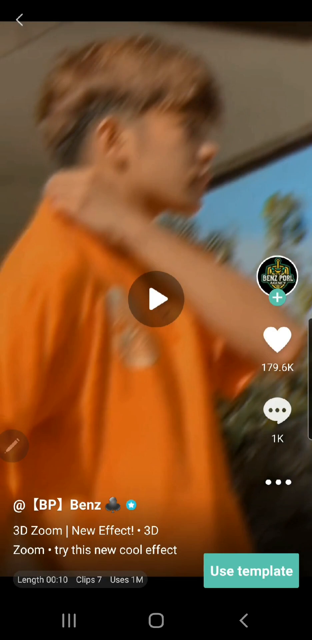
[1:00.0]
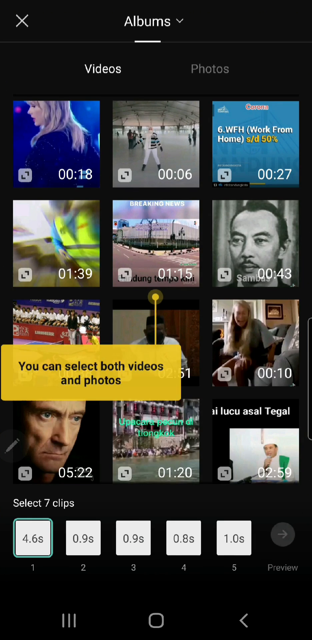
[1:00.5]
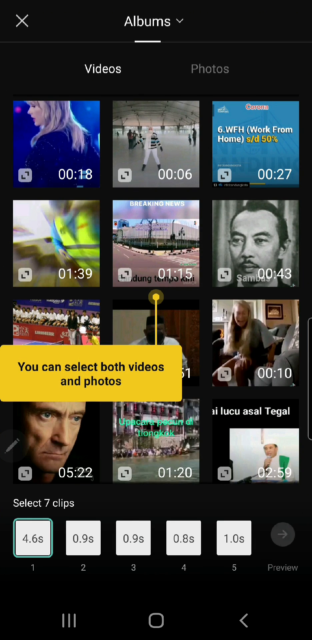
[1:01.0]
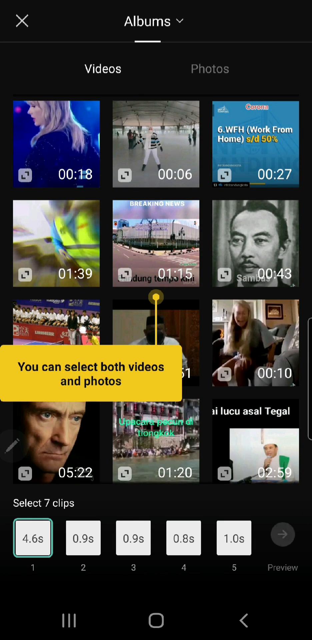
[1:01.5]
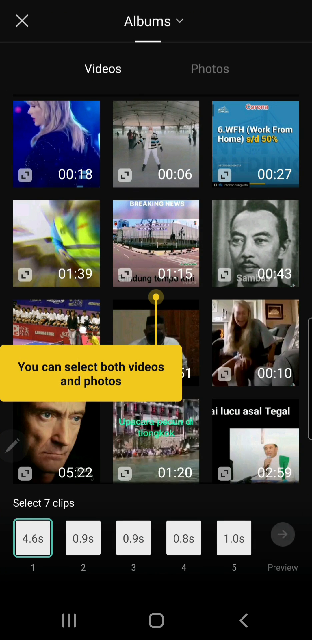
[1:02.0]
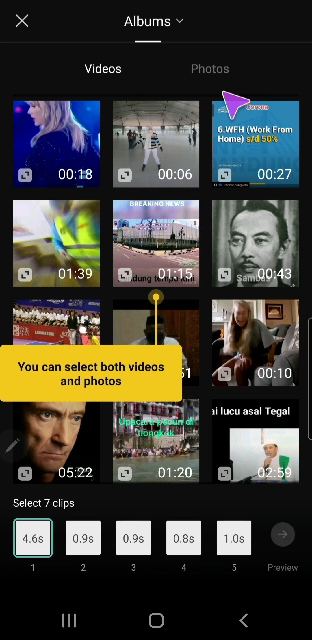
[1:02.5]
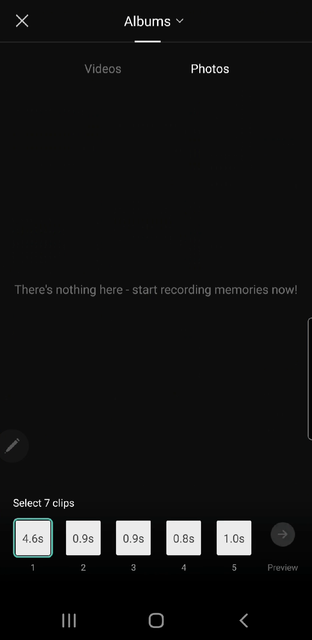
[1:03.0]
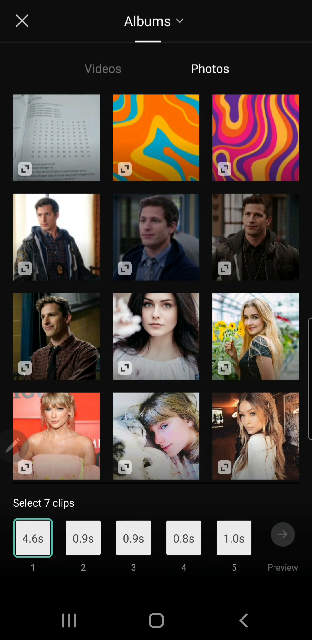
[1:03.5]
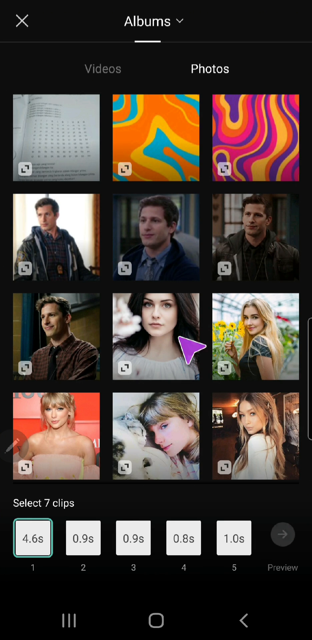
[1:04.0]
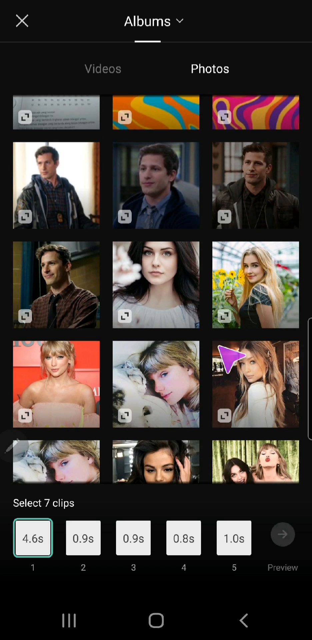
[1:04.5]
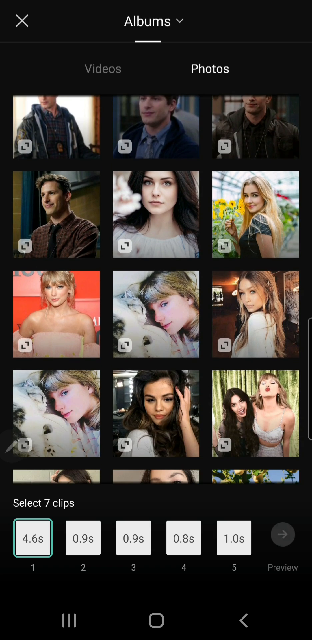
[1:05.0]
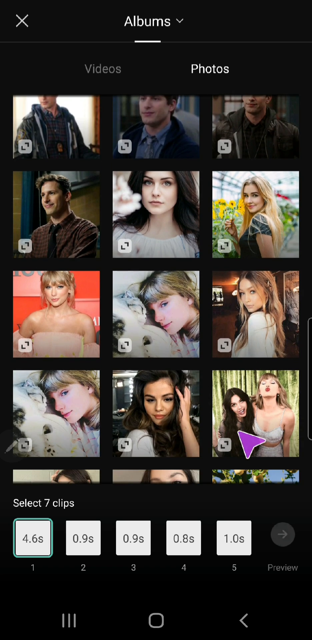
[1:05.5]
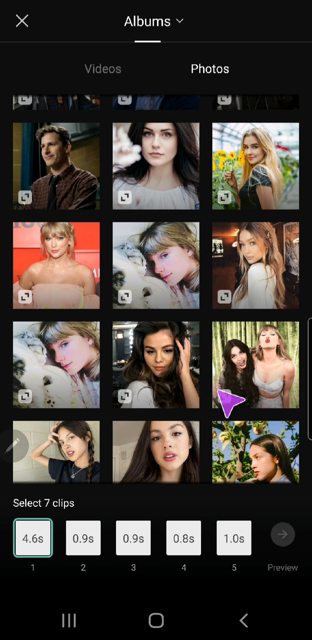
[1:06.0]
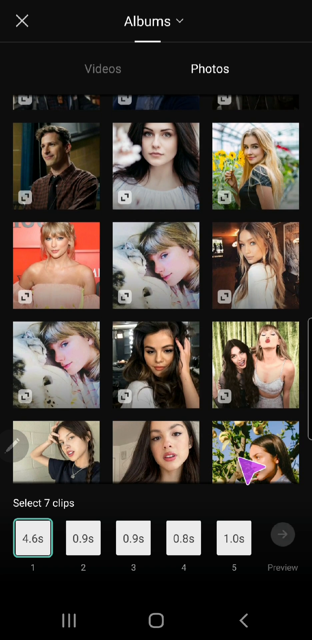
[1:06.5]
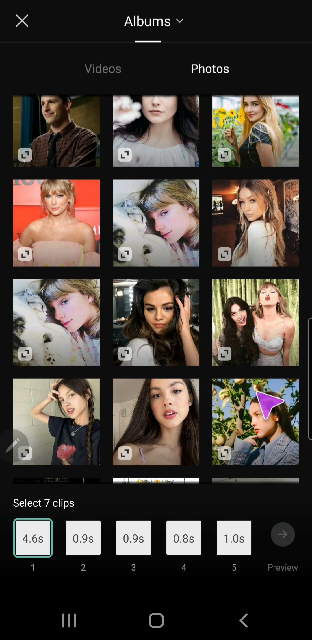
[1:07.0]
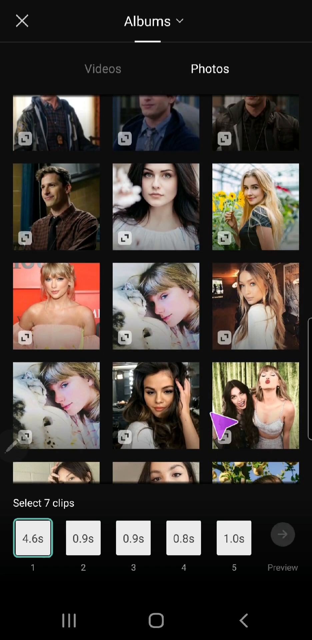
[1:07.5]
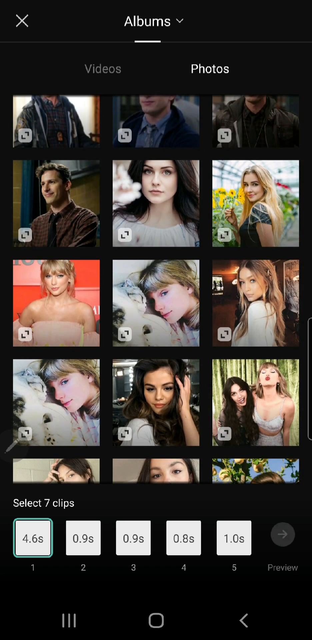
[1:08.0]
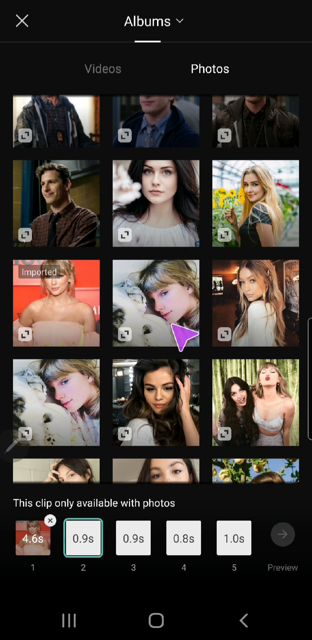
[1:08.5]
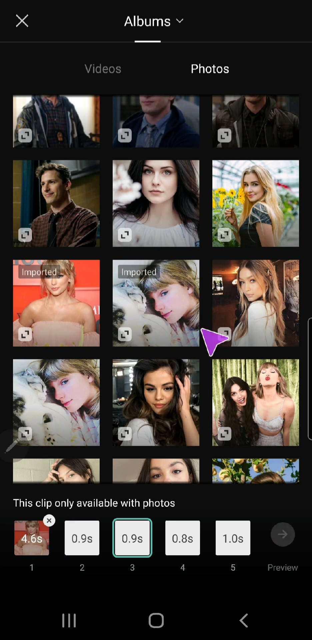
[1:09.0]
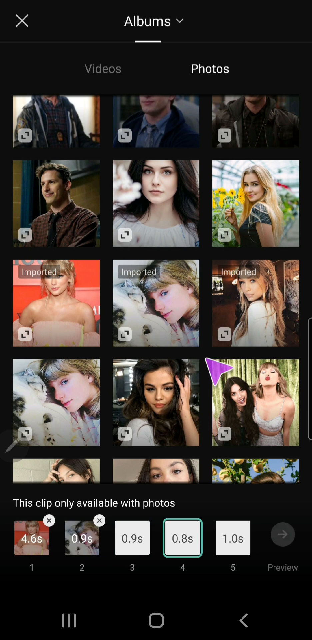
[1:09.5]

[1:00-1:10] An album opens with a grid of thumbnails of 12 different videos. The mouse pointer goes up and clicks the photos option, showing a grid of photos, mostly of women, including one of Taylor Swift and some men at the top. The user seems to browse through the photos, then selects three, which are added at the bottom.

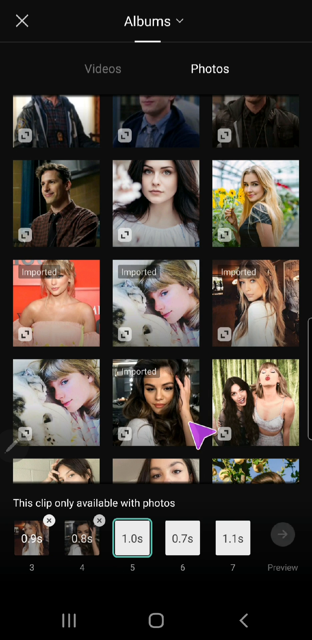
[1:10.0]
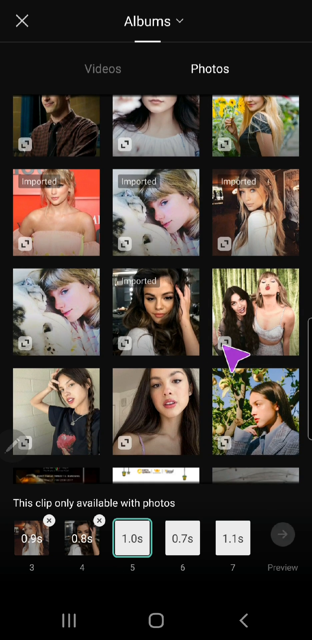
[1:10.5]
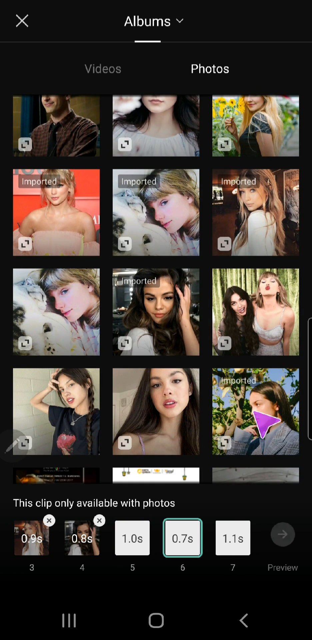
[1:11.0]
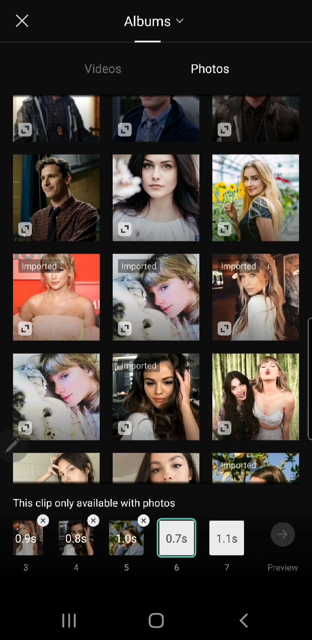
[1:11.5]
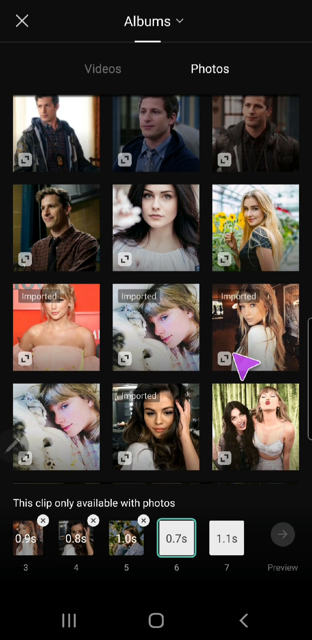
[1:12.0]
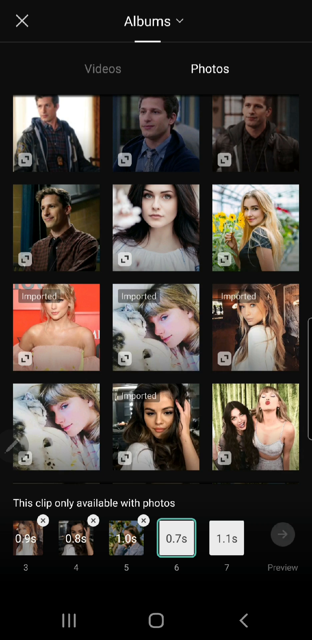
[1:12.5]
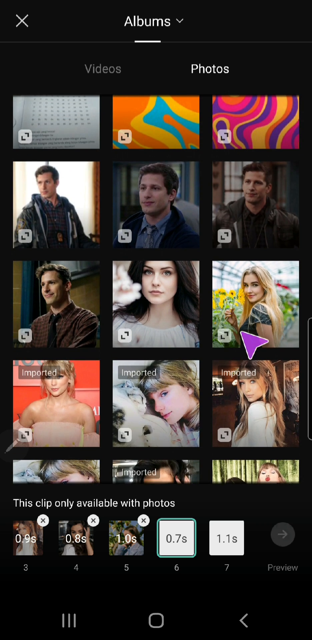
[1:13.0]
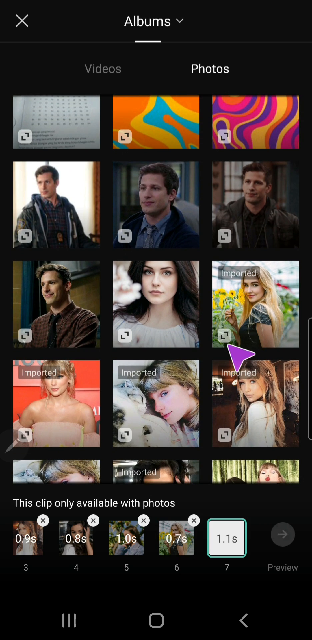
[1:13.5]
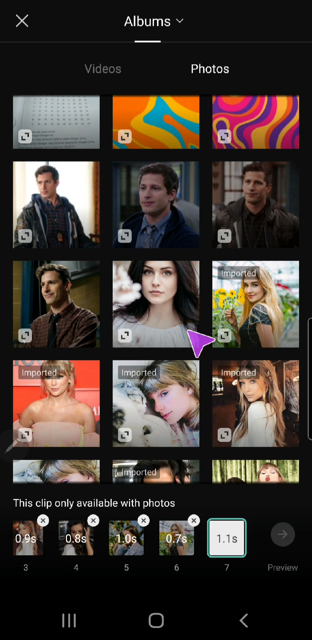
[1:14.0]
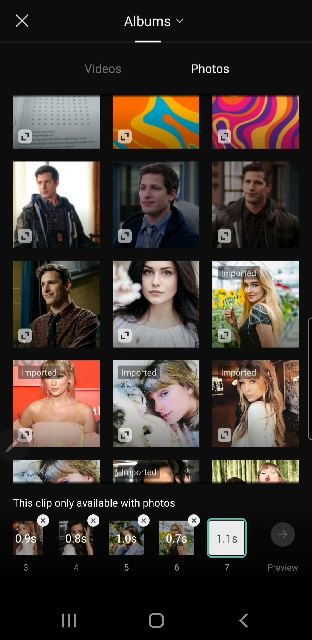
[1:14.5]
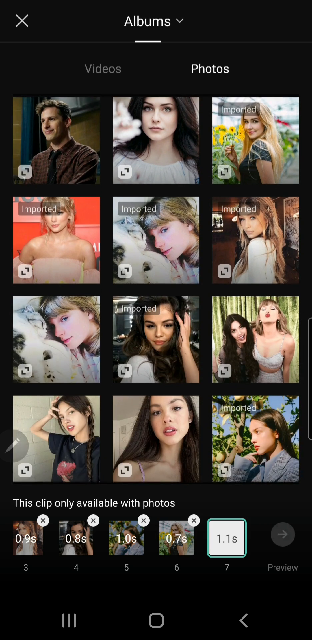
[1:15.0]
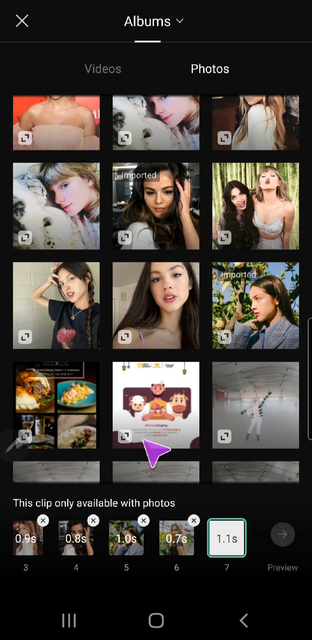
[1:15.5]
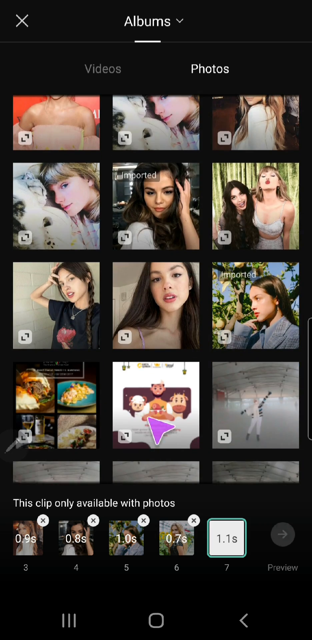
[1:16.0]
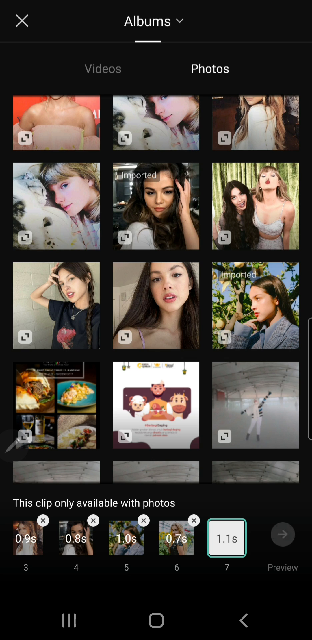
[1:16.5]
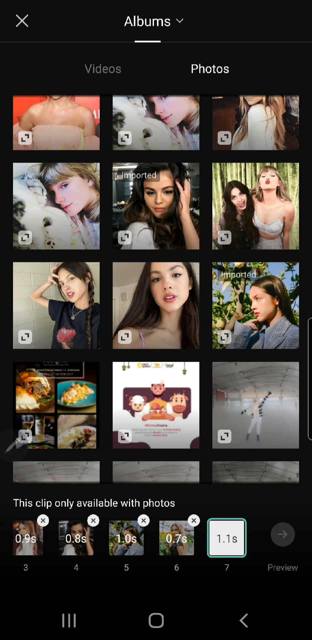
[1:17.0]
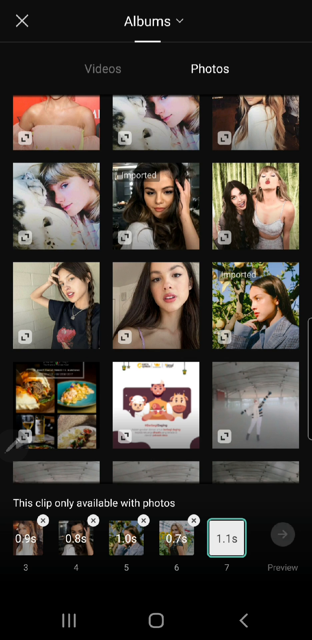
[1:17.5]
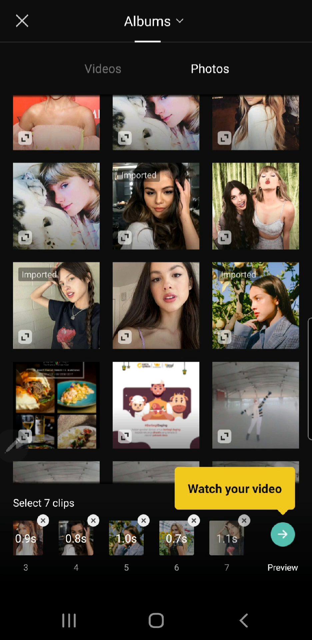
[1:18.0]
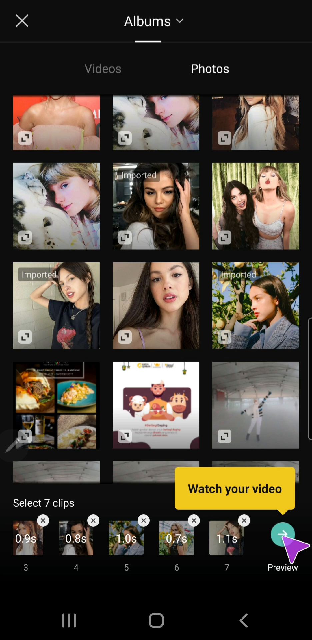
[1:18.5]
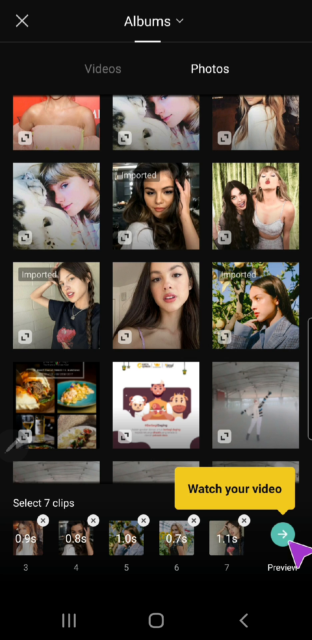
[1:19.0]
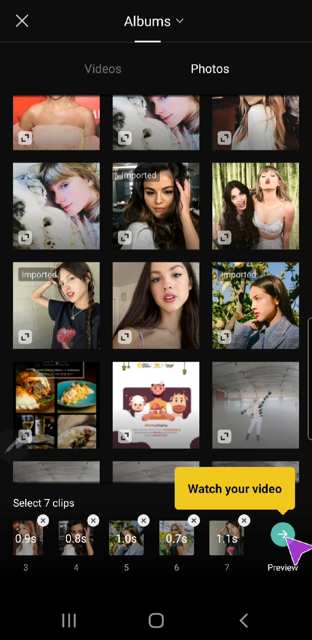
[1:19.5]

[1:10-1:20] The mouse pointer goes through the thumbnails, selecting only pictures of women; after each selection a small thumbnail of it appears at the bottom. They select a total of seven pictures. The bottom also shows how long each image will be shown, each with its own time: the third image for 0.9 seconds and the fourth for 0.8 seconds. They then click a button in the bottom right corner that says "preview", with an arrow pointing right on a light blue circle.